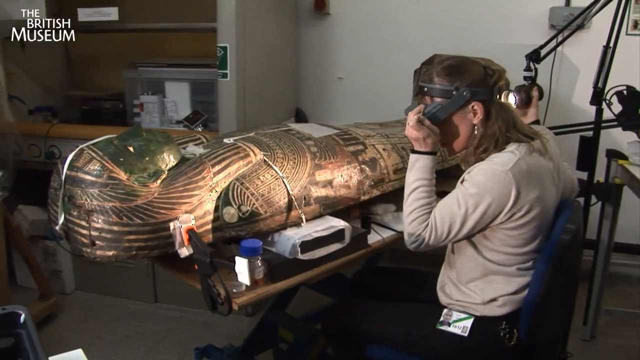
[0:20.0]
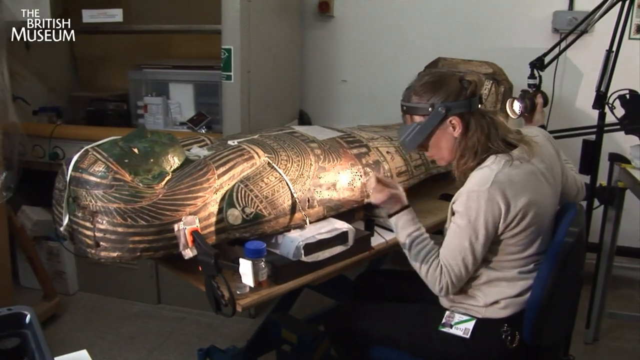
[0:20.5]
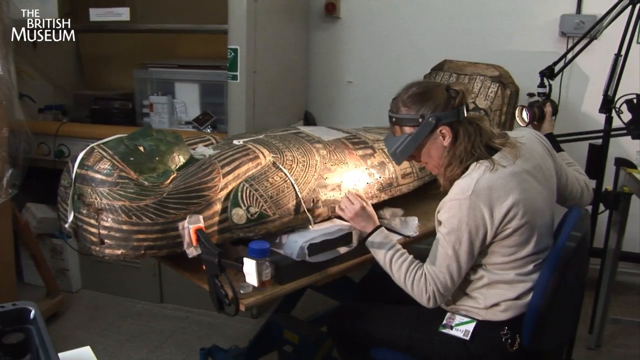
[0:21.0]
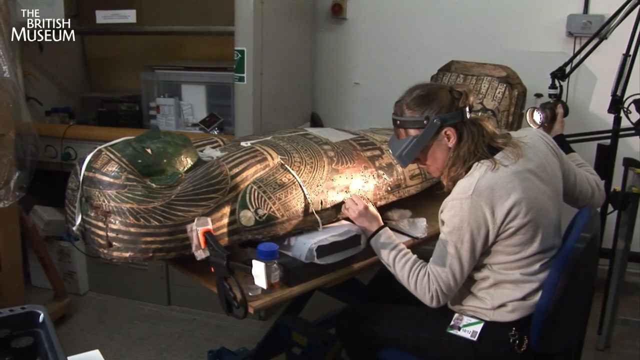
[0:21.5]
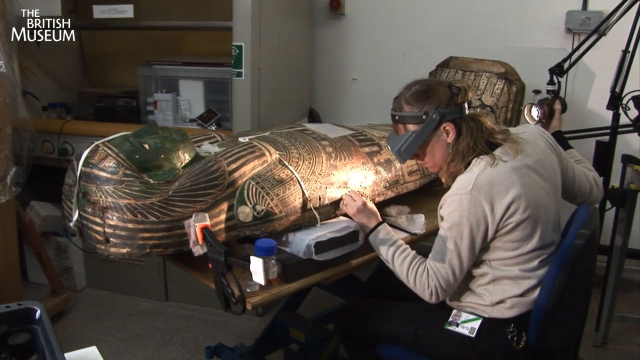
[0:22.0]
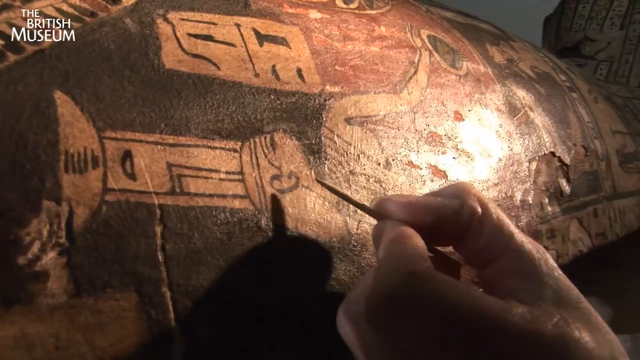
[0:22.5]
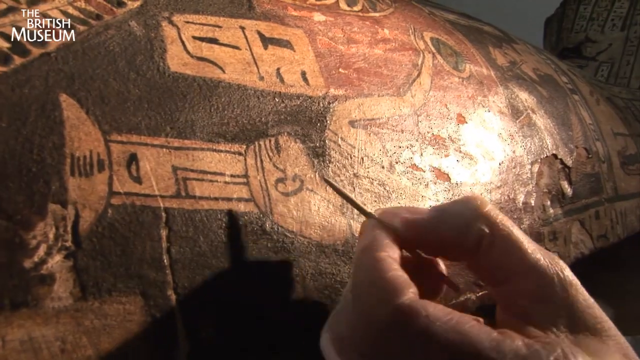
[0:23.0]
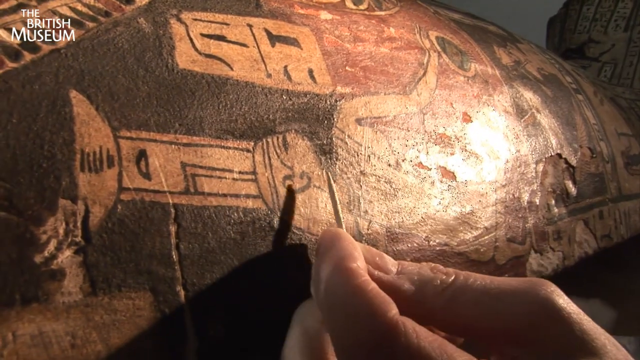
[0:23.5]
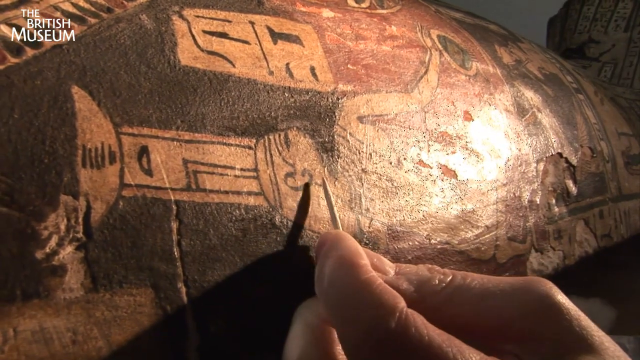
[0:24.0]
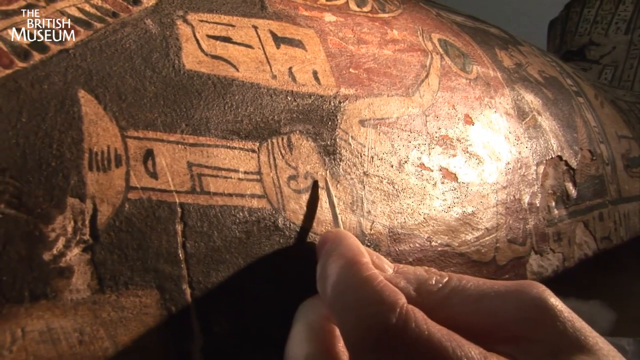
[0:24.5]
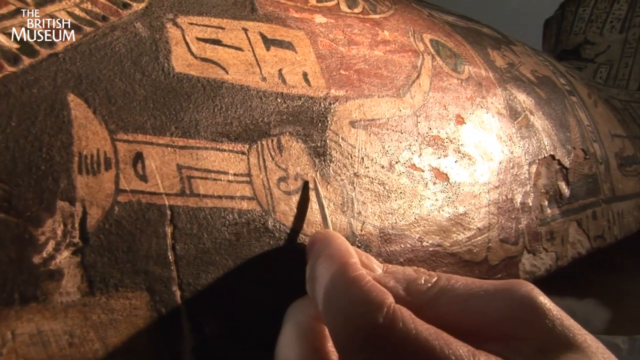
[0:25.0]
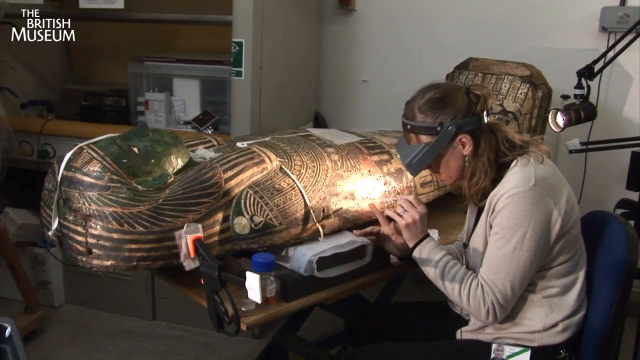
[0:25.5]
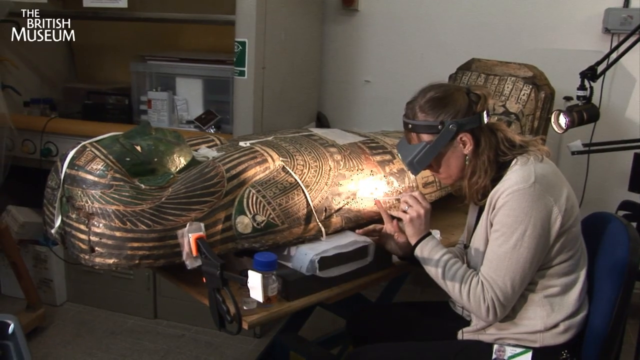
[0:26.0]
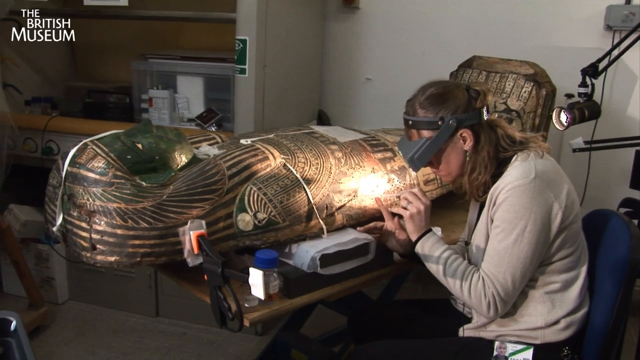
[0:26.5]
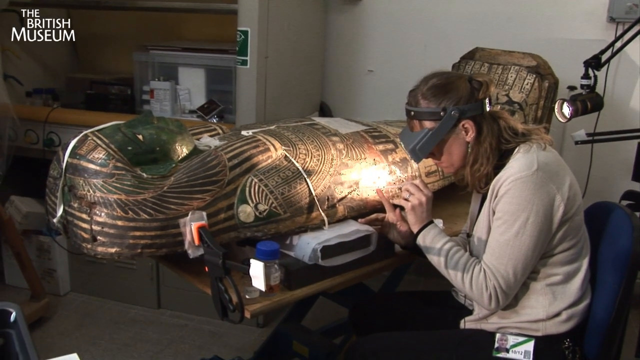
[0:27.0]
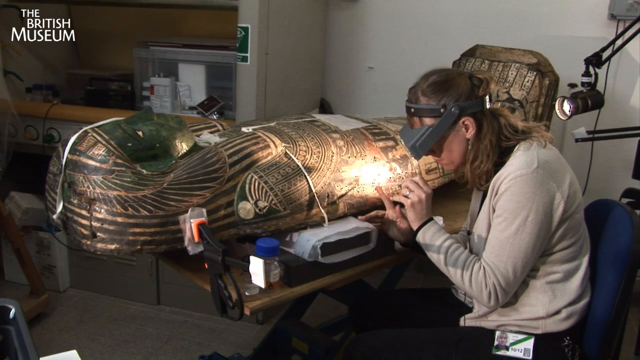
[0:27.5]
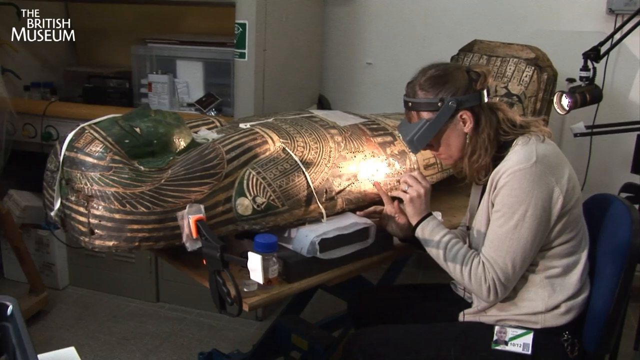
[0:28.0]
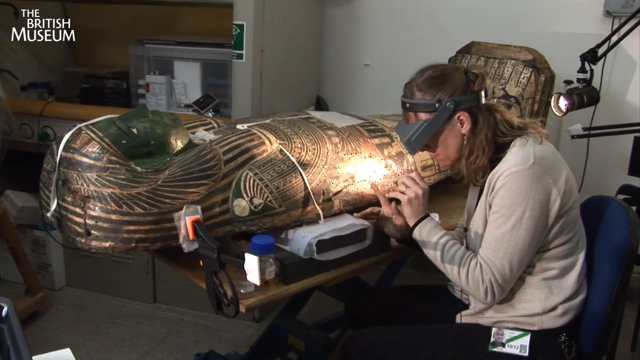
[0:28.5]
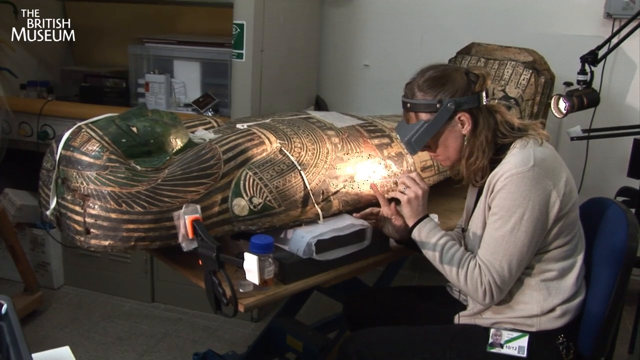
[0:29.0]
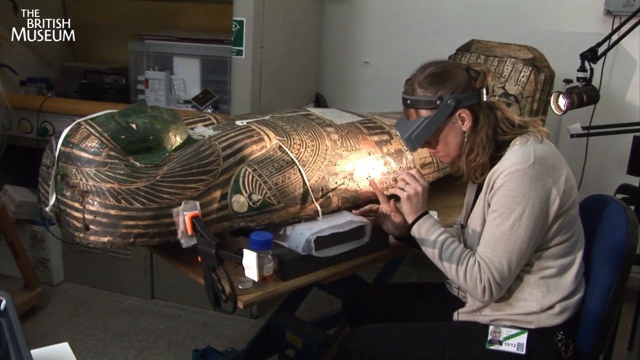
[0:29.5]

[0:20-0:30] The woman puts on some type of goggles or magnifying glasses to see exactly what she is looking at. She uses a small tool to do repair work on the coffin, working very diligently and meticulously. There also appears to be some type of light that she is holding to see what she is doing. The coffin is painted mainly gold and green, with several other colors.